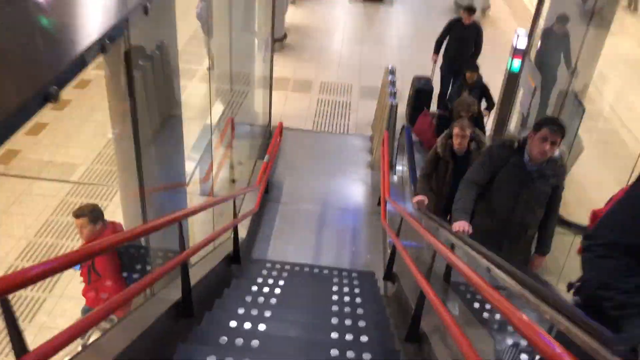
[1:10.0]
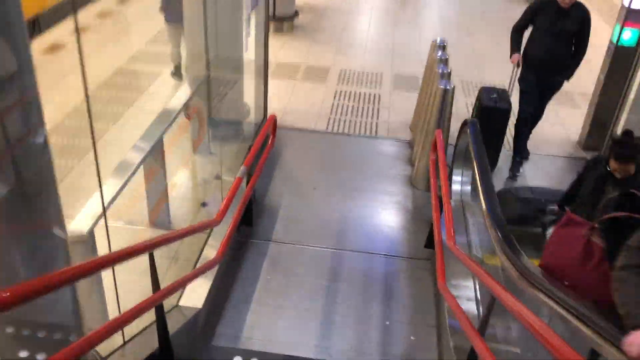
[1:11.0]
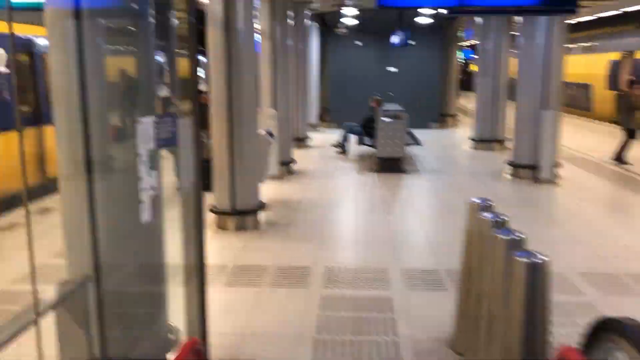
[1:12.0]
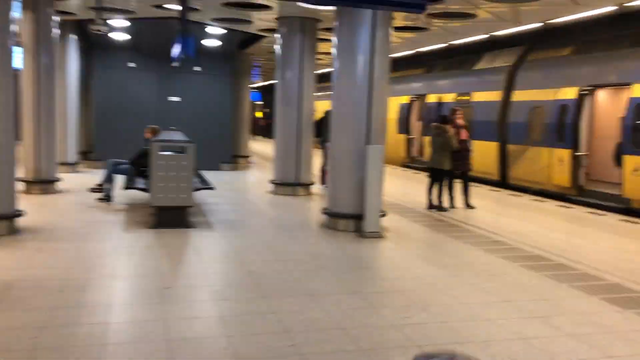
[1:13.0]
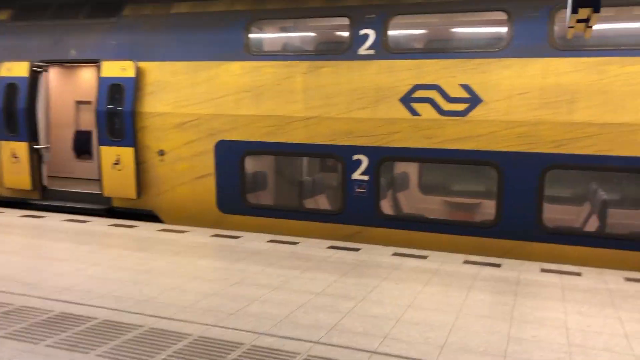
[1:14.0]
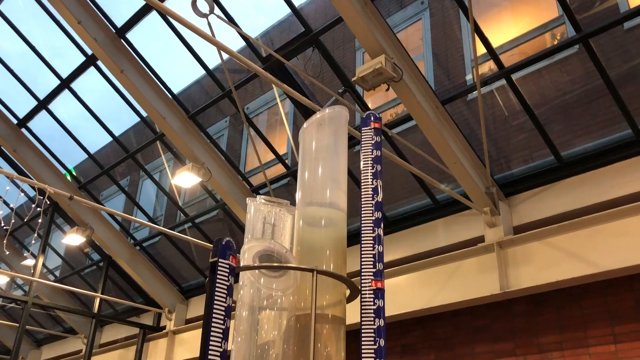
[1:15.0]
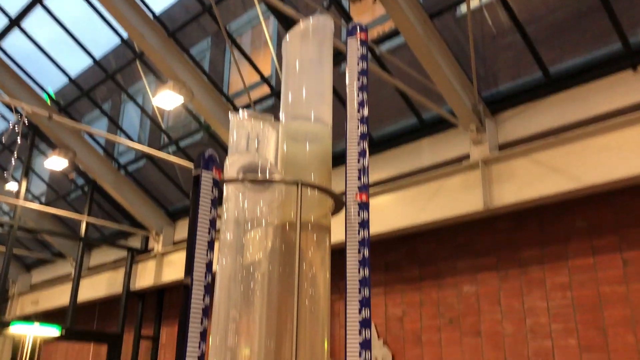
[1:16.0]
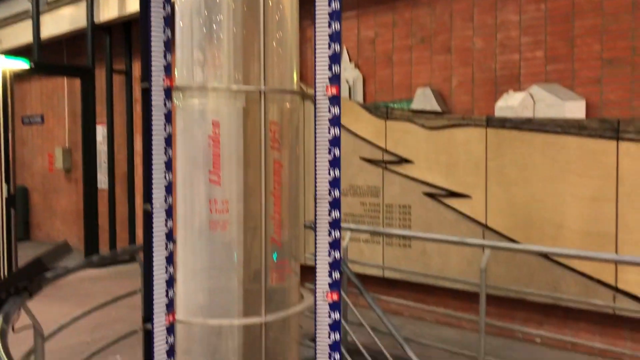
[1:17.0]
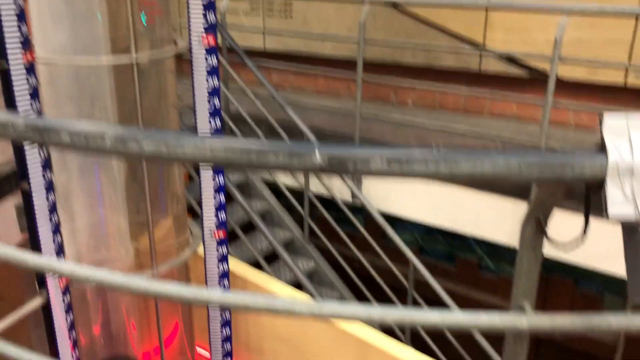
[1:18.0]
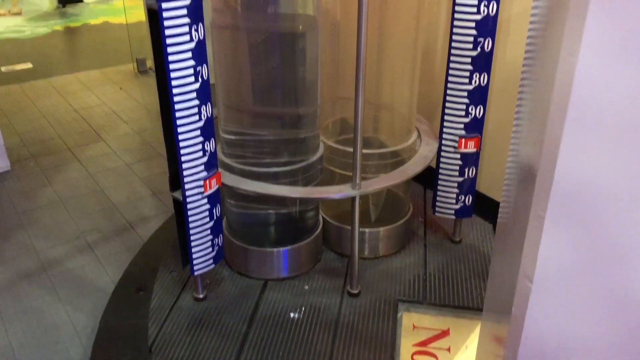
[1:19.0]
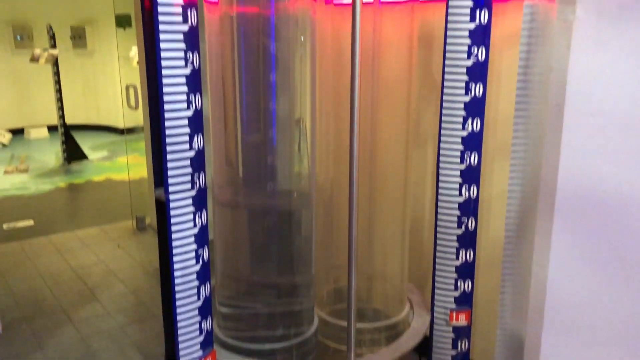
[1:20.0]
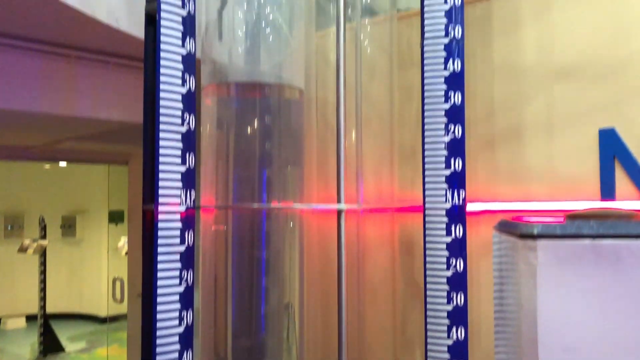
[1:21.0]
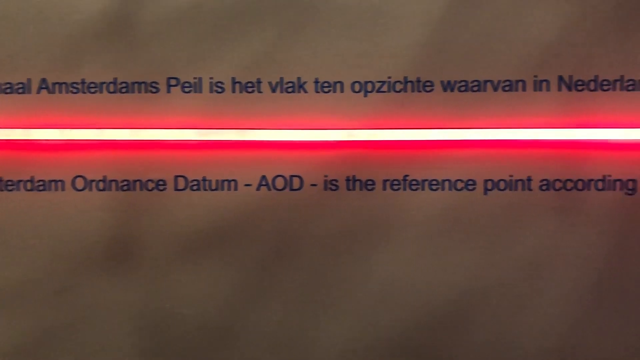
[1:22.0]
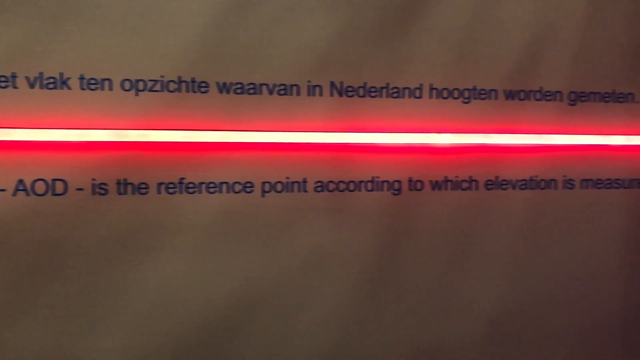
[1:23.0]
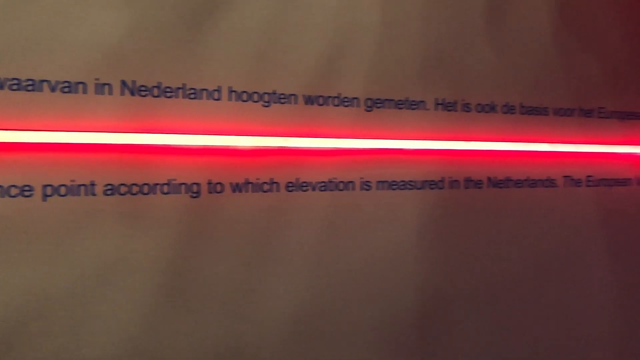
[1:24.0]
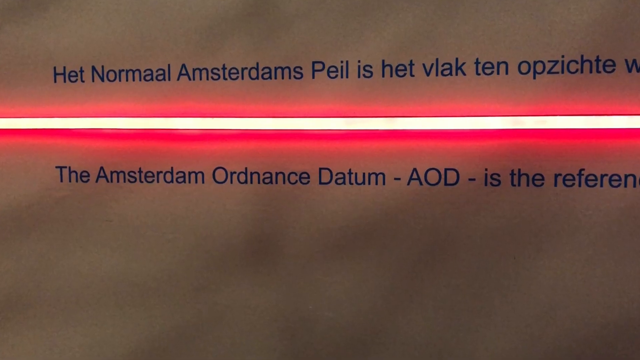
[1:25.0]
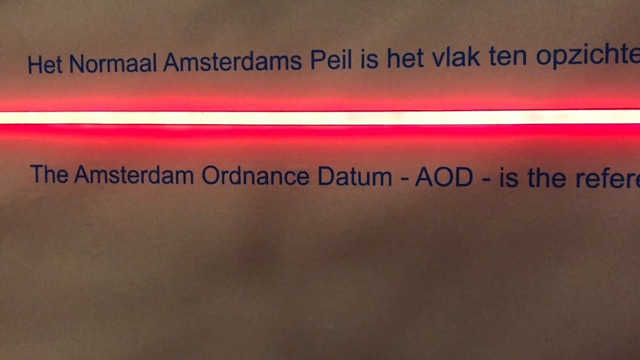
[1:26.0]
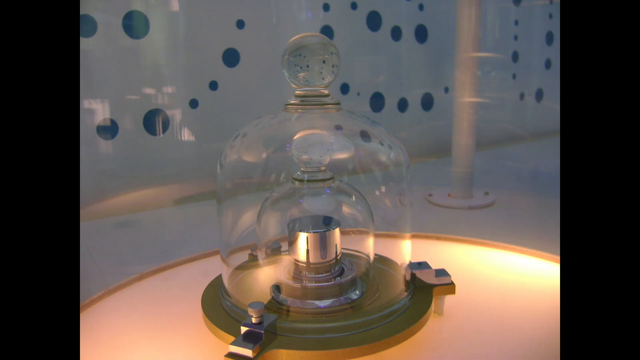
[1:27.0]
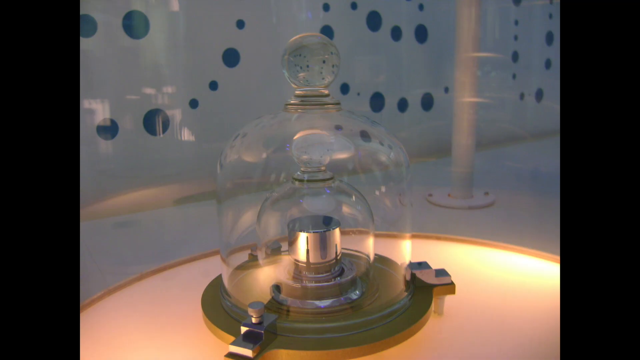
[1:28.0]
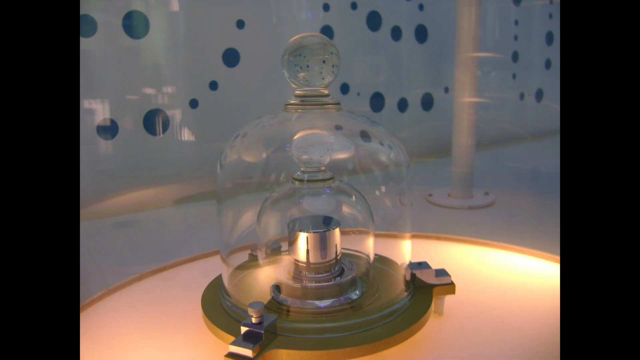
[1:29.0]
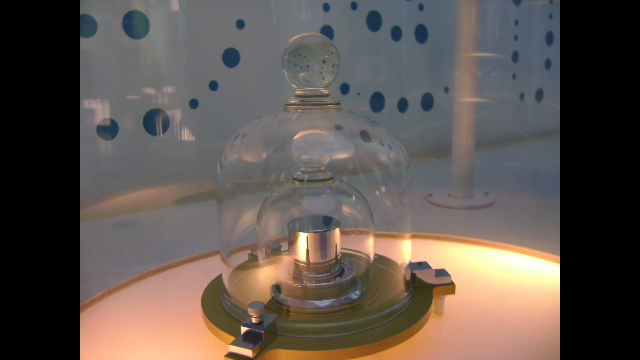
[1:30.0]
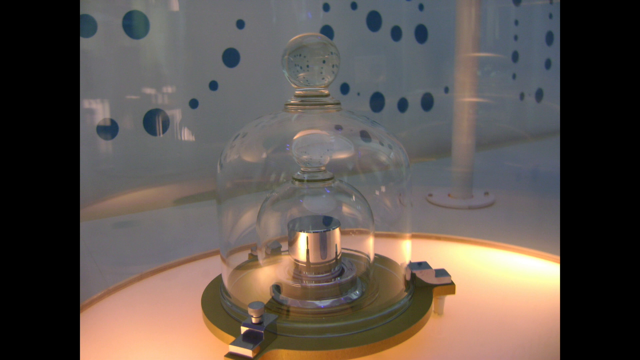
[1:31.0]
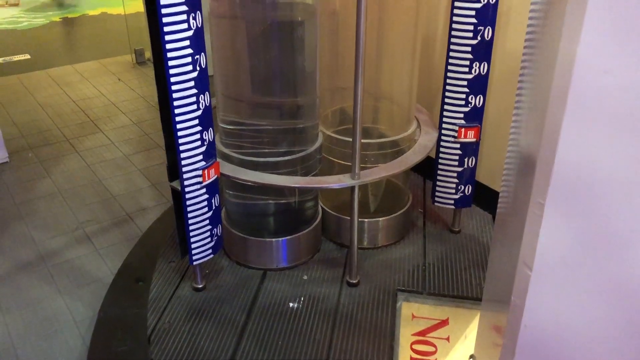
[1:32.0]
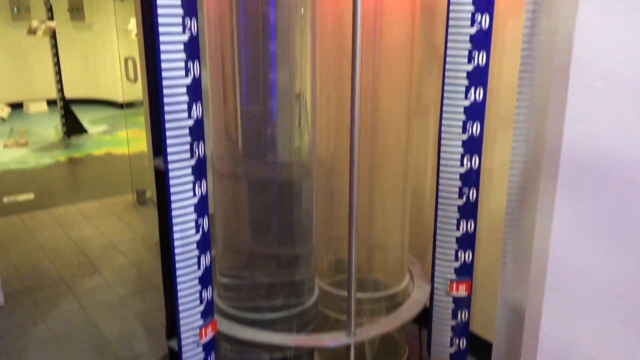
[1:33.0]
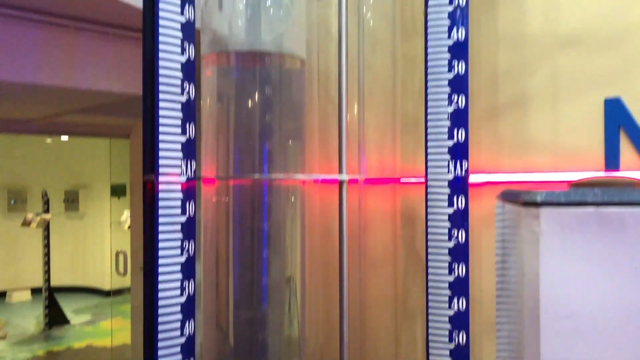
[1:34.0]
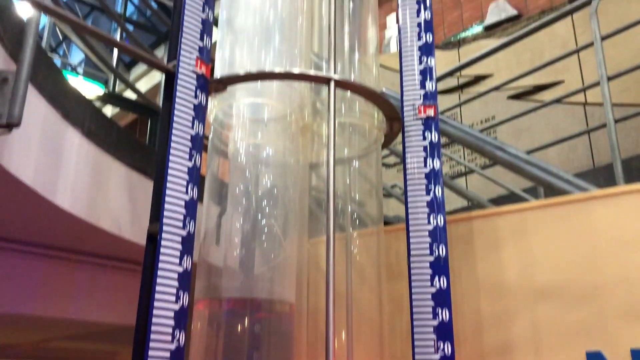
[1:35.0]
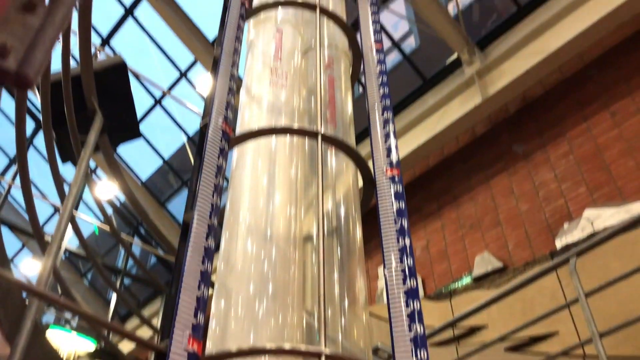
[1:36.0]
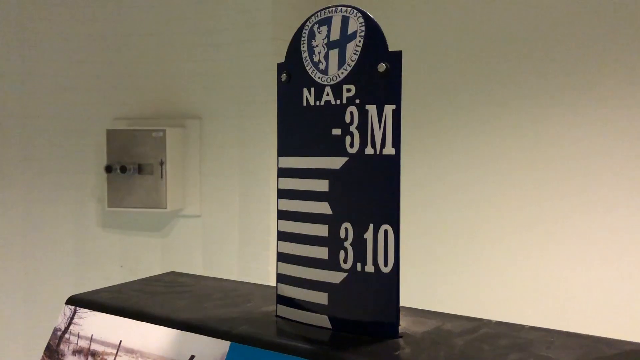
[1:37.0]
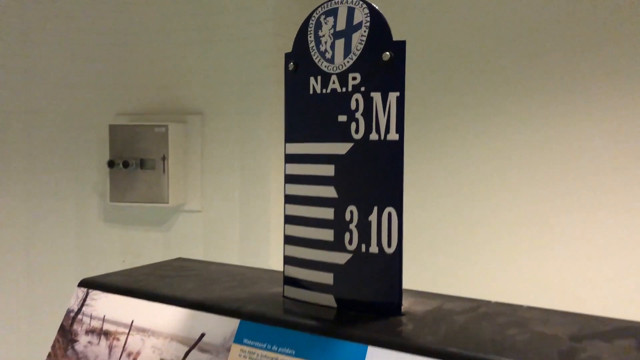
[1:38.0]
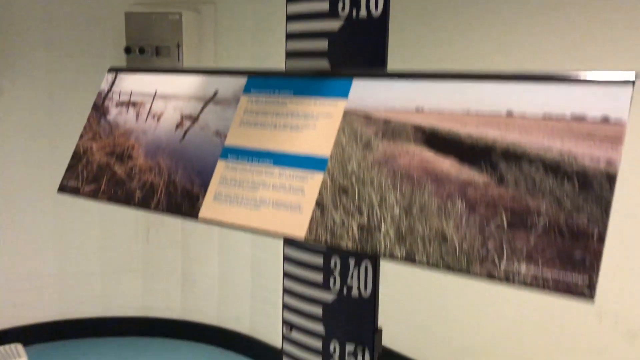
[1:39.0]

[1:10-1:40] The camera heads down towards the Metro. On the left are black stairs with red rails, which the person holding the camera walks down; on the right is an escalator going up, with a constant stream of people, some with suitcases, coming up it. At the bottom of the stairs, yellow subway trains with a blue stripe are on both the left and right sides. The view moves to the right, where there is a carriage called the number two. The scene cuts to some kind of measuring device: two cylinders with a blue measuring ruler on either side, going from 20 centimetres below one metre to quite high up, at least two metres. Another cut shows two lines of writing in different languages with a red laser line between them; the bottom line appears to be English and reads "Amsterdam Ordnance Datum AOD". The scene cuts to what looks to be some kind of scientific device made of glass, with two domes covering a small metal cylinder. The video returns to the measuring device with the two blue rulers, which is incredibly tall, then moves to a ruler at three metres, going down.